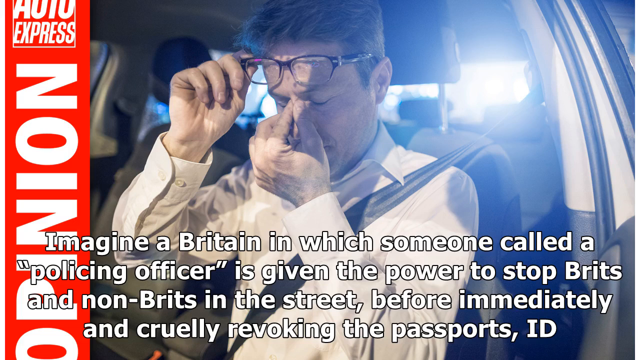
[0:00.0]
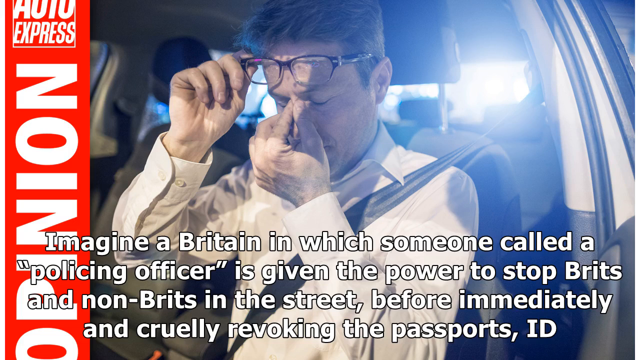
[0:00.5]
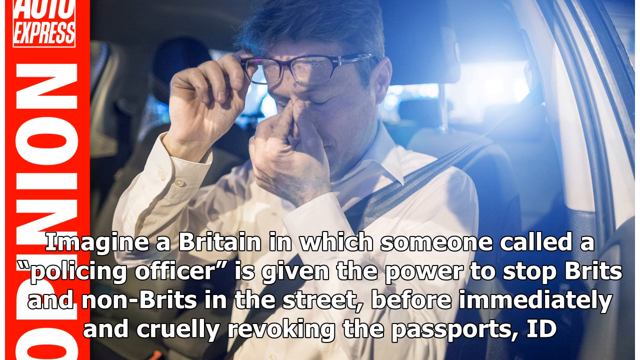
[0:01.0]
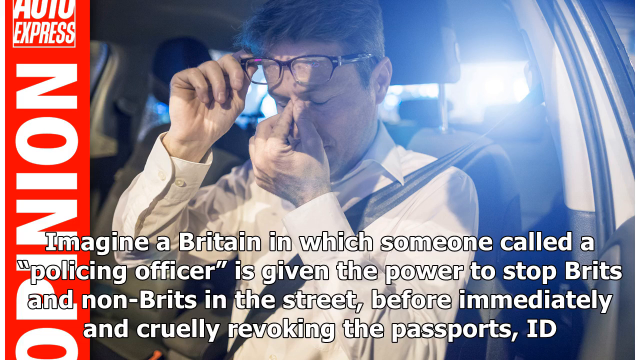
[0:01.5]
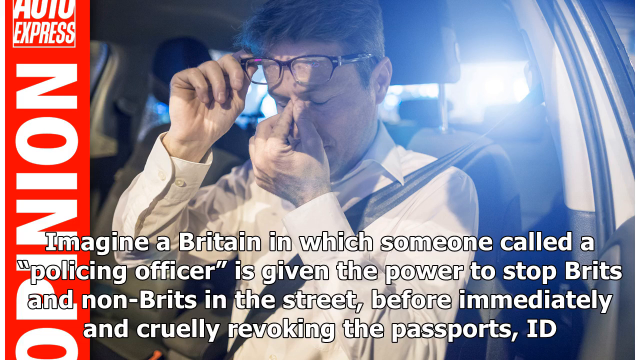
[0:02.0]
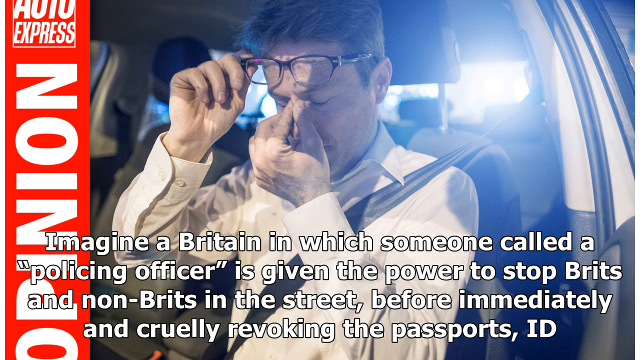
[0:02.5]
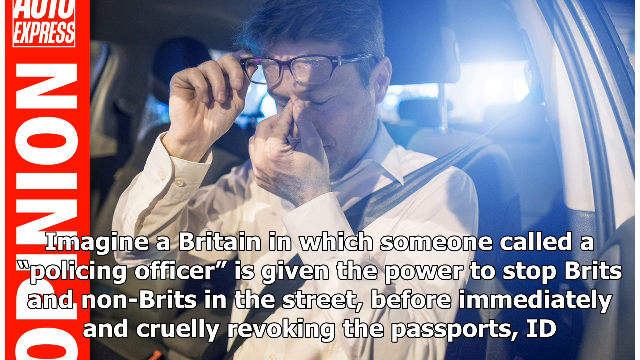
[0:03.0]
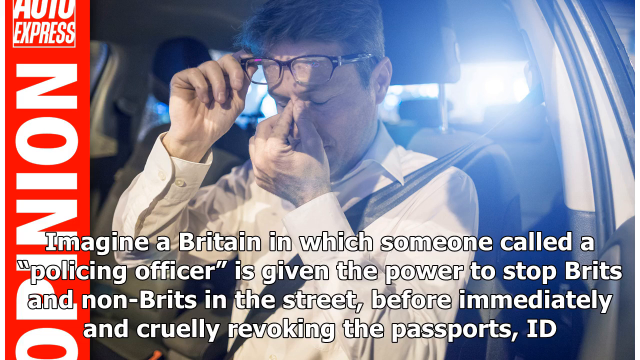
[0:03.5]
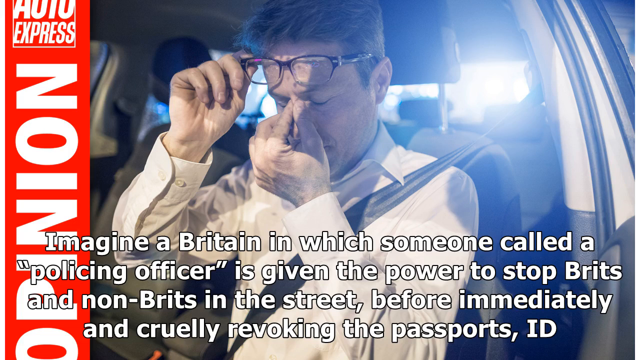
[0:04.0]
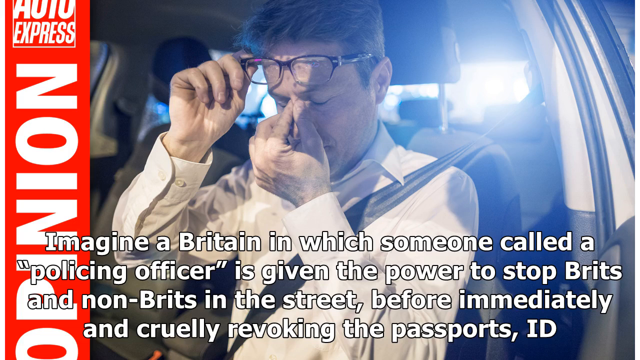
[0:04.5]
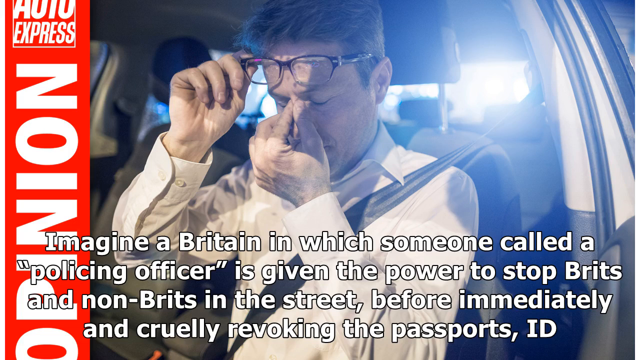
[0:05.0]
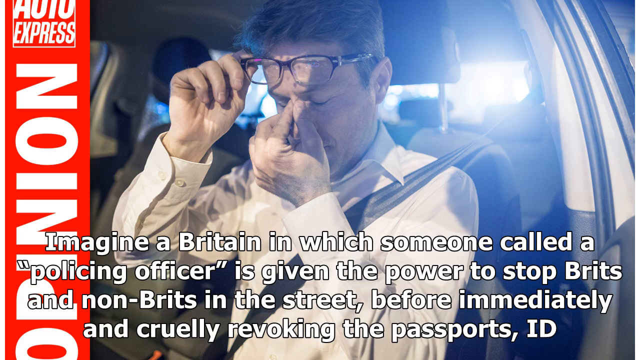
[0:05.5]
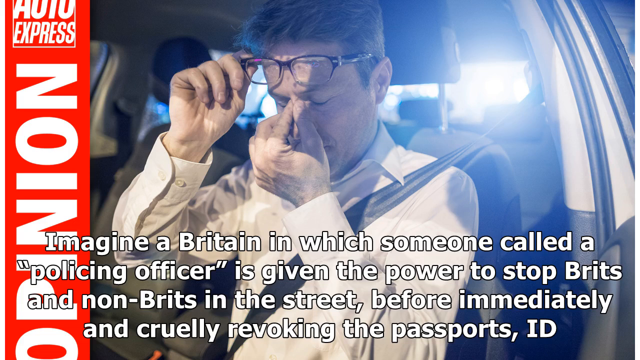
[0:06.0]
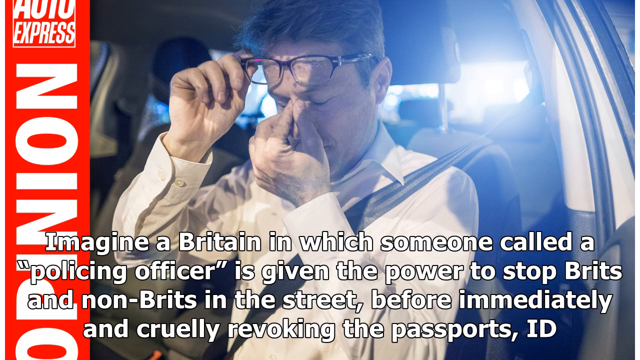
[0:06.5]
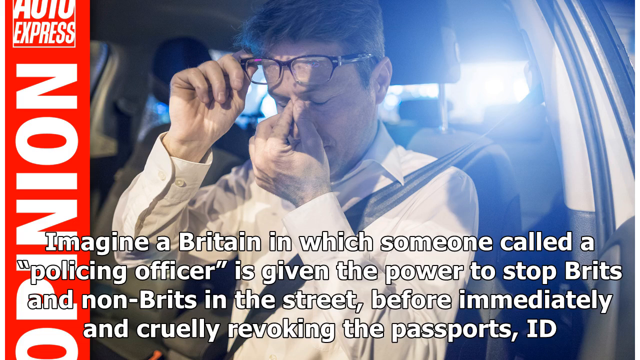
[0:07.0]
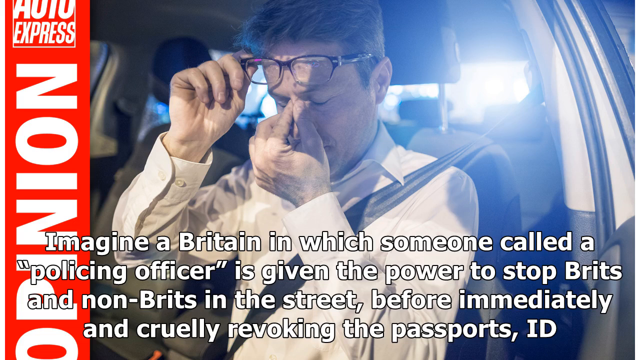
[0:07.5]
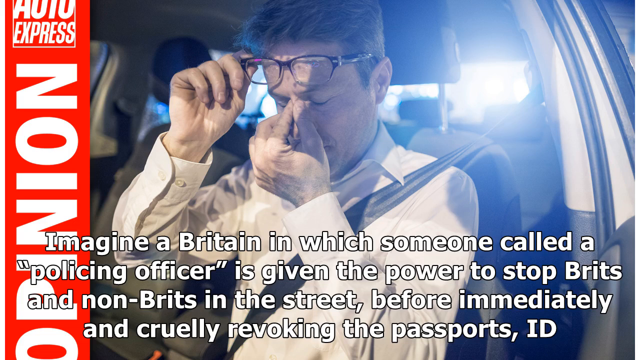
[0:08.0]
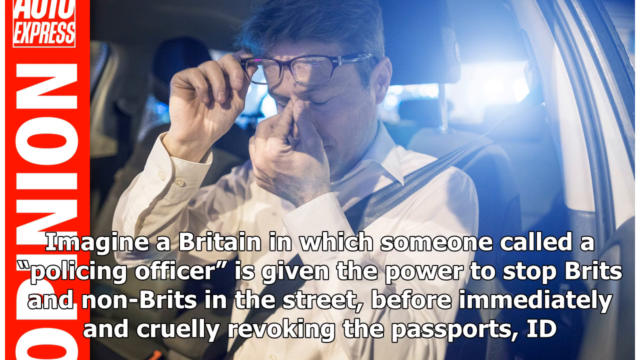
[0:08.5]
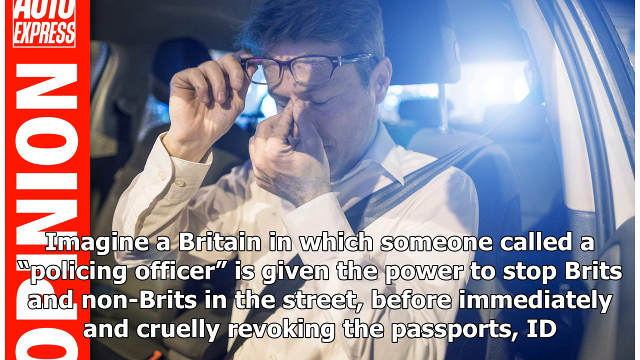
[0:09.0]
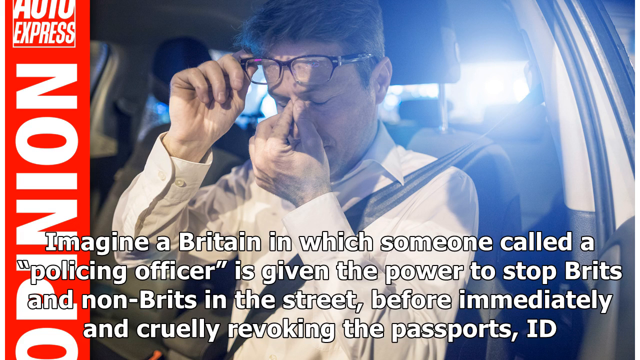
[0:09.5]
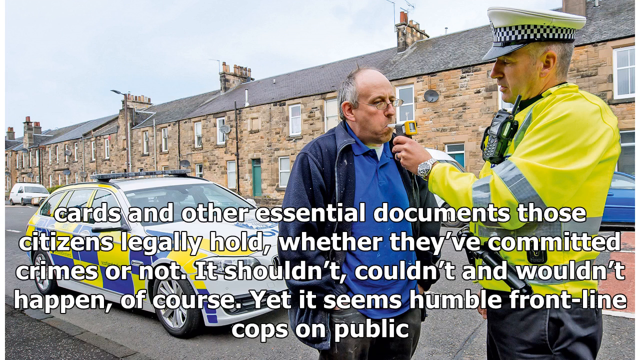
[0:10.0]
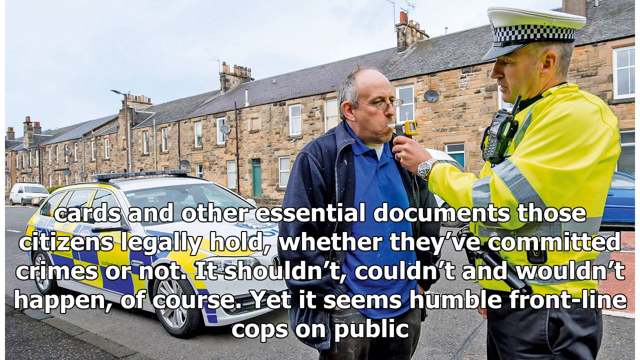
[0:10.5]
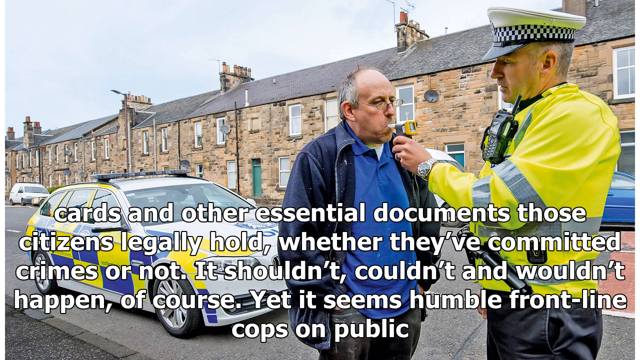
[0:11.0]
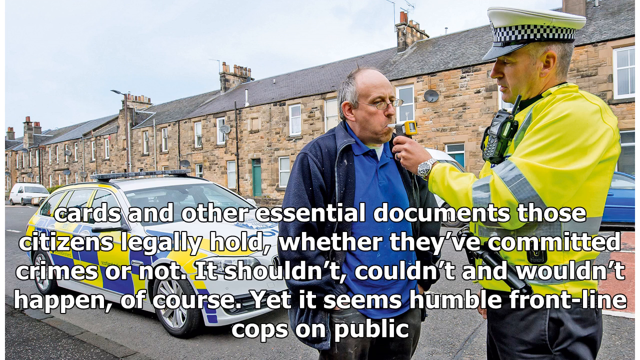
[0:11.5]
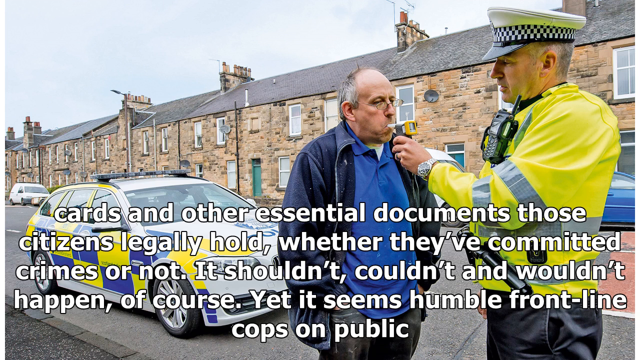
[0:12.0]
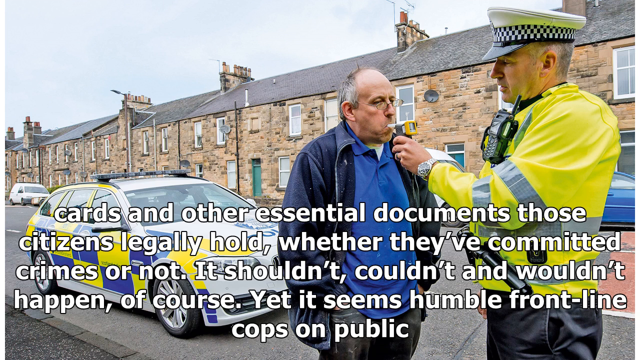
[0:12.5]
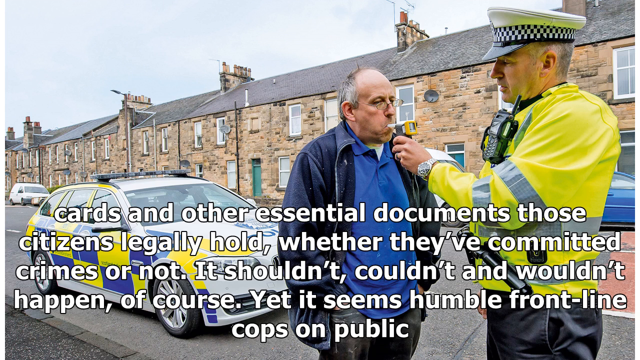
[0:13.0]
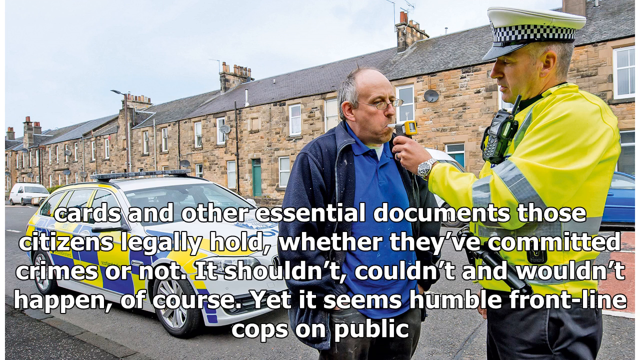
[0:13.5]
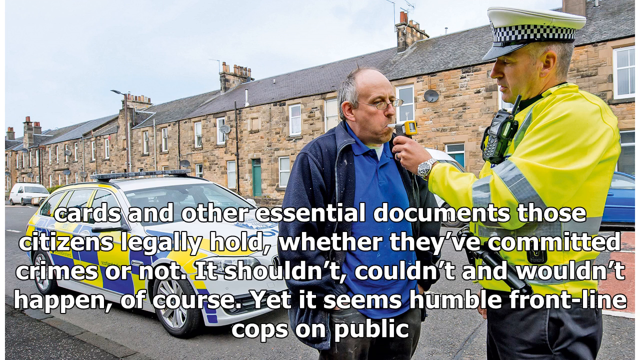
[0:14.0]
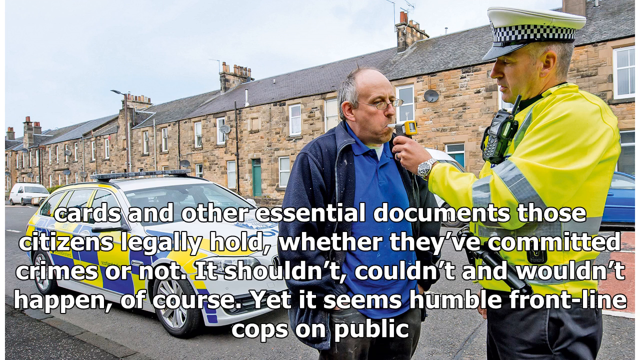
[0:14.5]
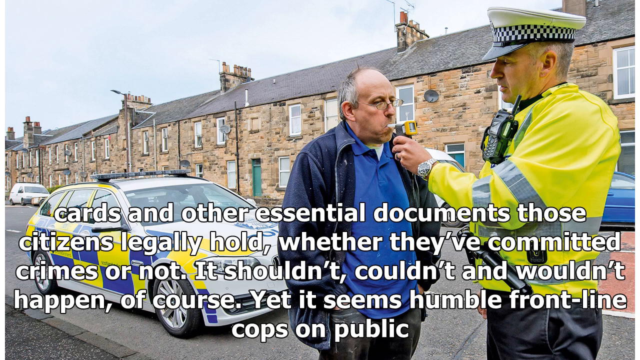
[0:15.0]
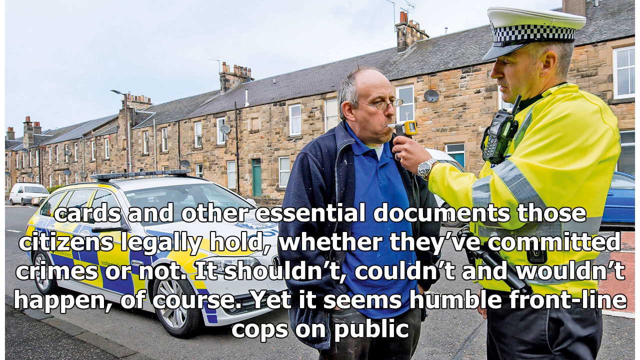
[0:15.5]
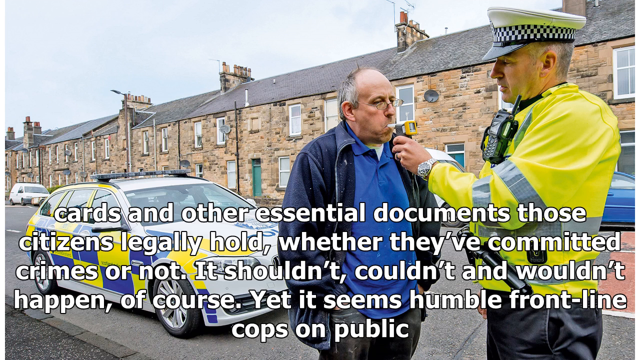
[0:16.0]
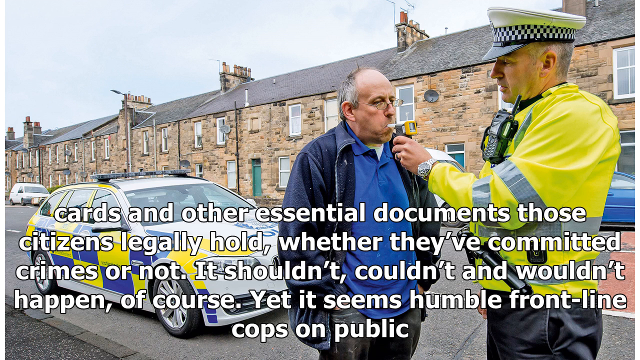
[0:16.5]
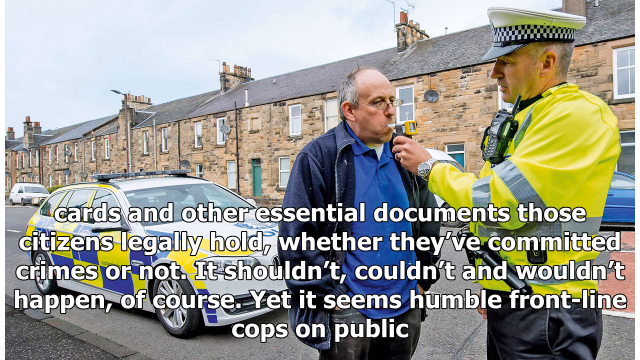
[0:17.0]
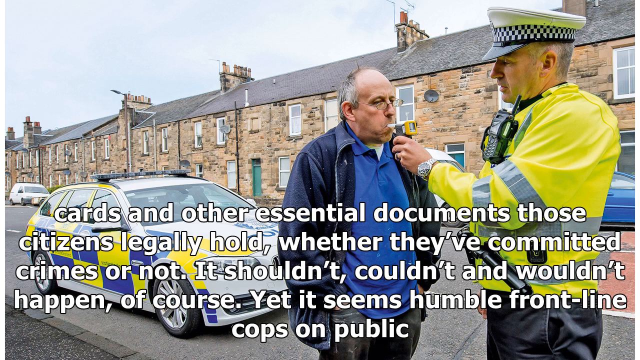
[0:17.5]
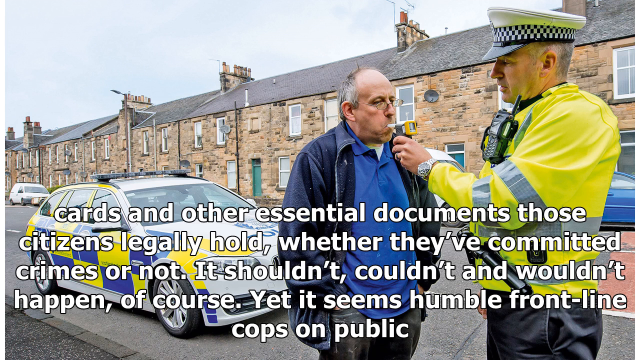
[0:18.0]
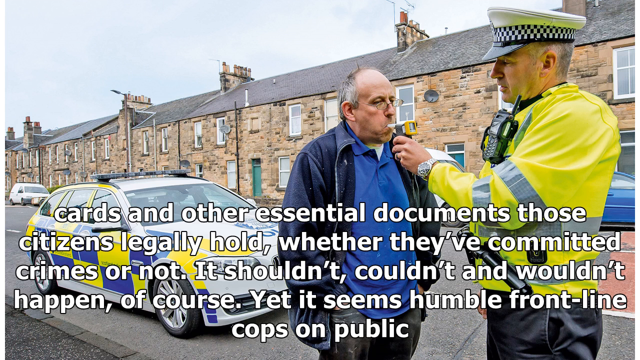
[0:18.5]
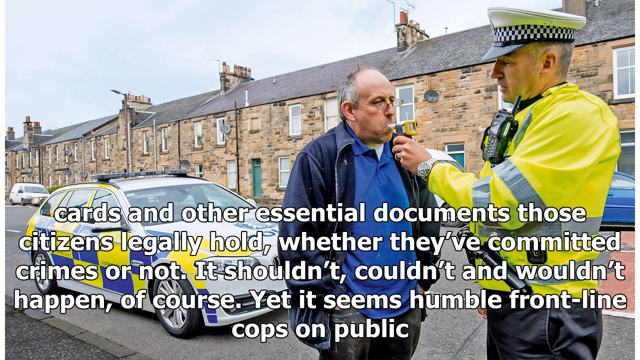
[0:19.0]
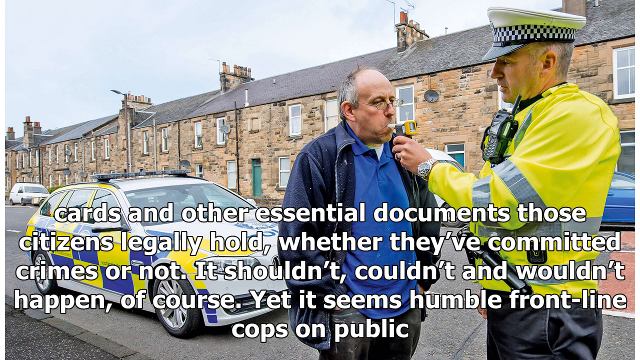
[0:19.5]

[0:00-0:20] A man lifts his glasses up off his face and kind of pinches the area between his eyes. Text reads "imagine a Britain in which someone called a policing officer is given the power to stop Brits and non Brits in the street before immediately and cruelly revoking the passport card." The text moves on to the cards and other essential documents those citizens legally hold, whether they've committed crimes or not, and reads "it shouldn't couldn't and wouldn't happen of course." After the man in the car, a second picture shows a man on the right wearing a yellow long-sleeved shirt with gray shiny reflector strips and what looks like a yellow police hat with a black and white checkerboard band around it. He has another man blow into something that he is checking. Buildings and cars are in the background.